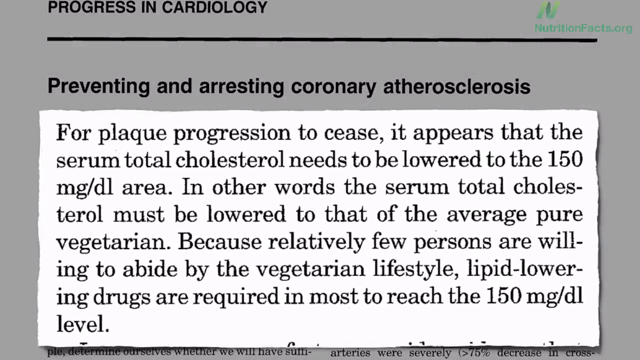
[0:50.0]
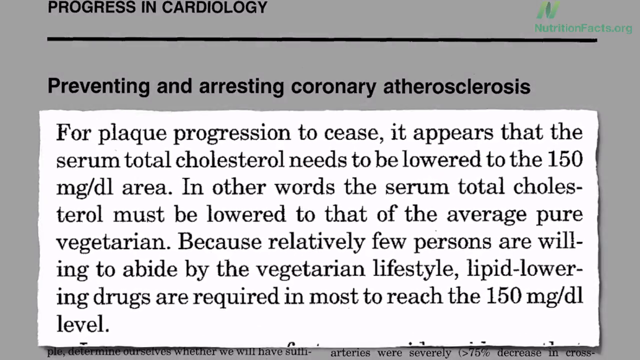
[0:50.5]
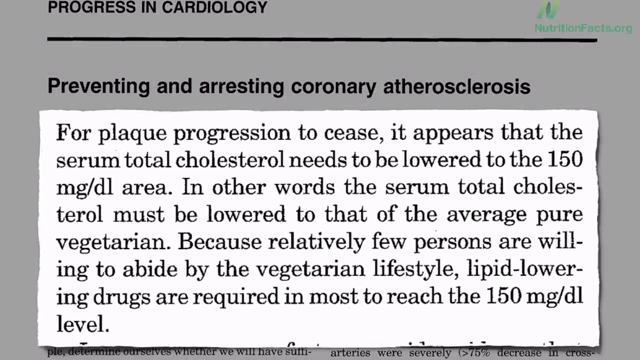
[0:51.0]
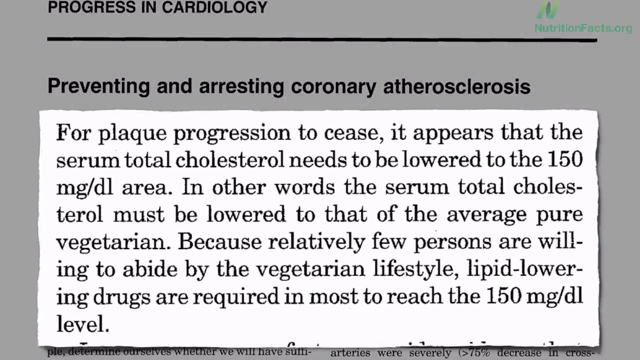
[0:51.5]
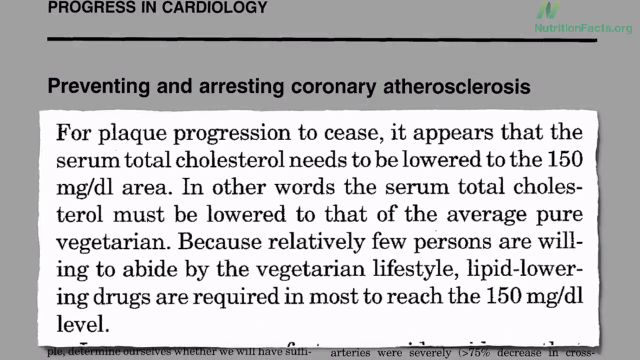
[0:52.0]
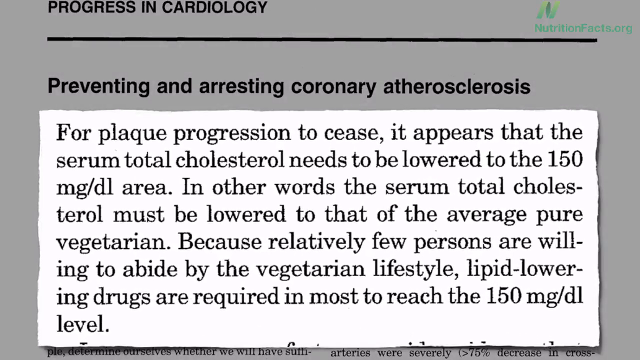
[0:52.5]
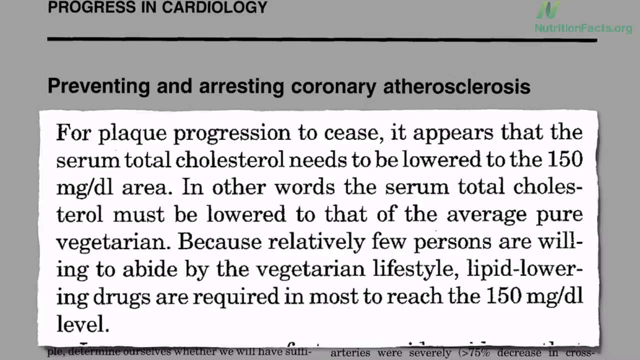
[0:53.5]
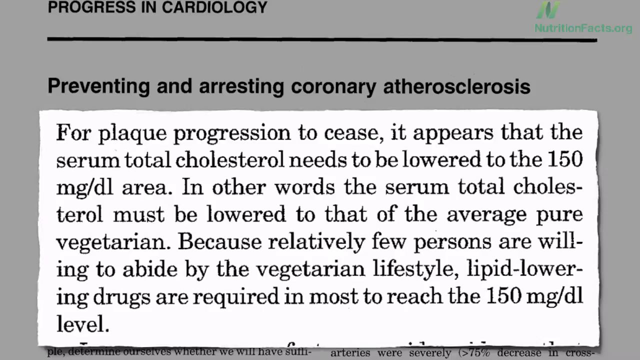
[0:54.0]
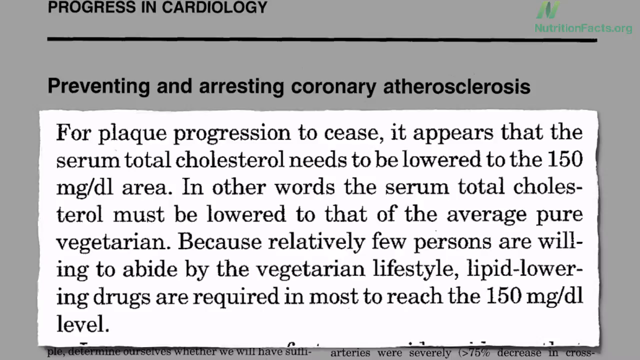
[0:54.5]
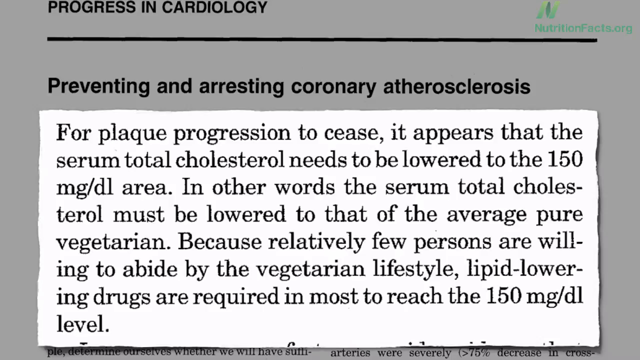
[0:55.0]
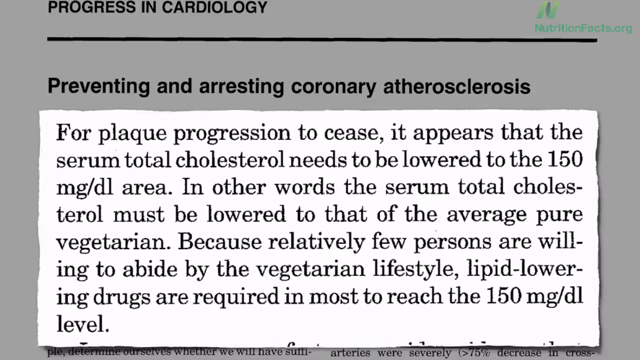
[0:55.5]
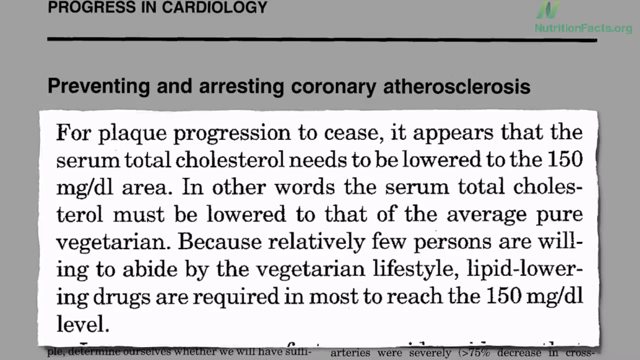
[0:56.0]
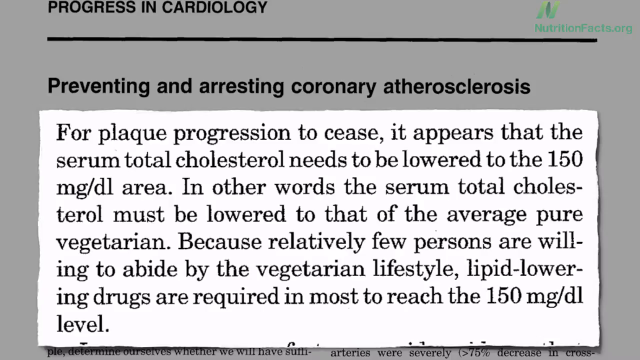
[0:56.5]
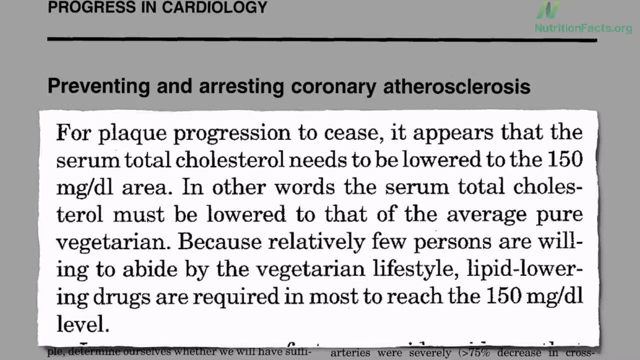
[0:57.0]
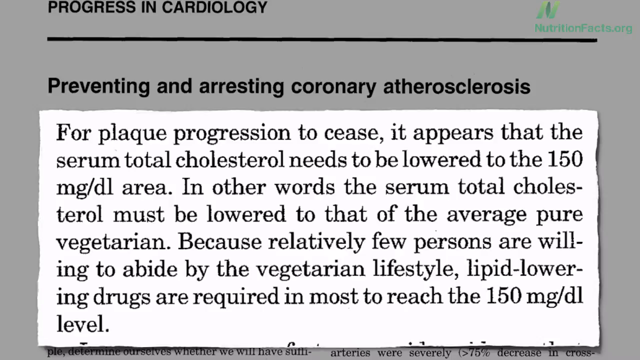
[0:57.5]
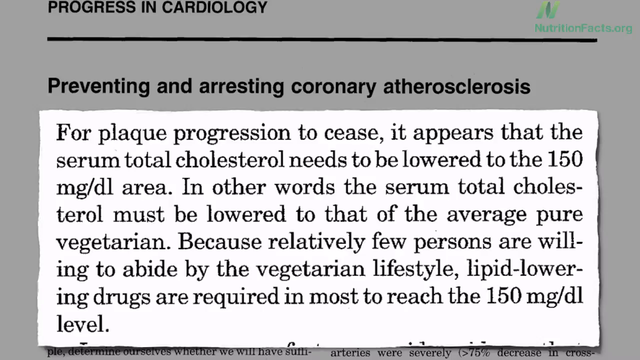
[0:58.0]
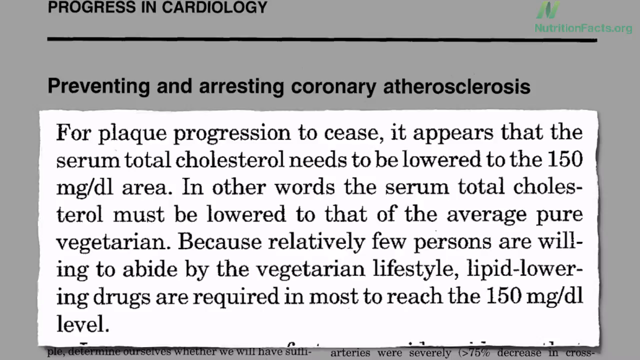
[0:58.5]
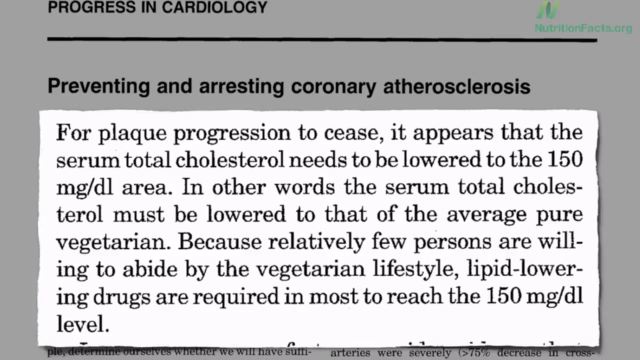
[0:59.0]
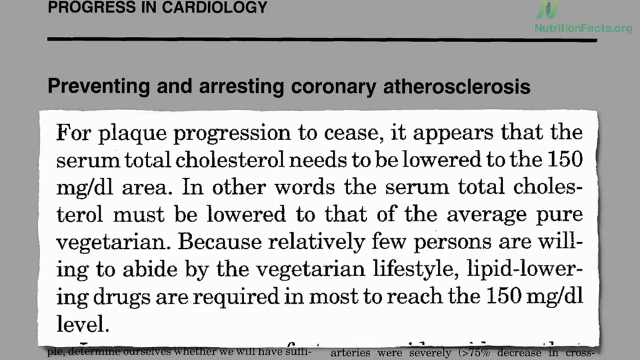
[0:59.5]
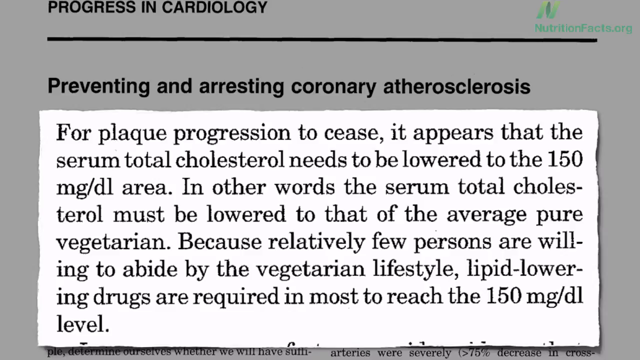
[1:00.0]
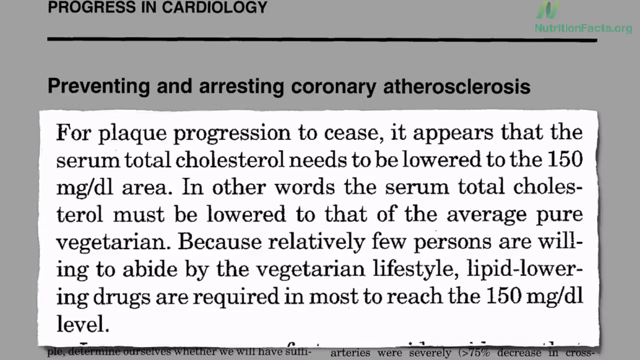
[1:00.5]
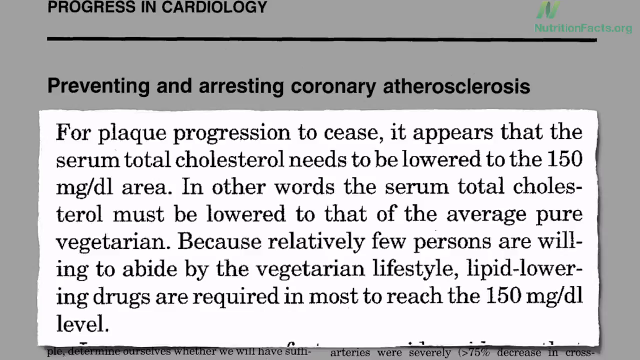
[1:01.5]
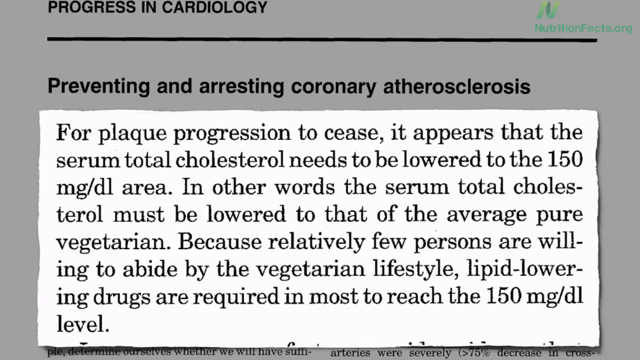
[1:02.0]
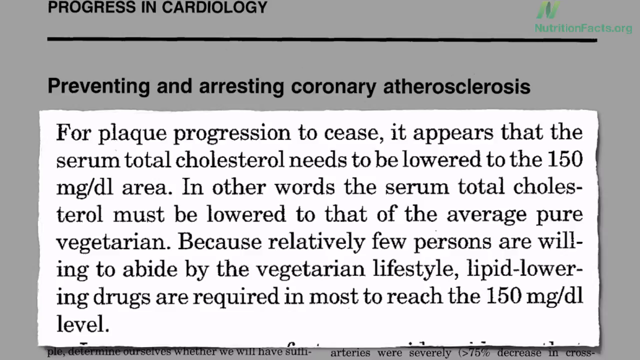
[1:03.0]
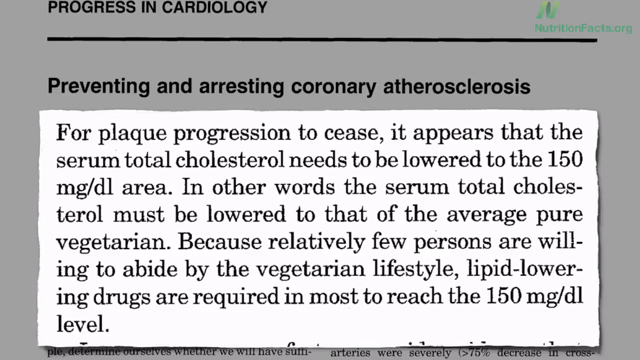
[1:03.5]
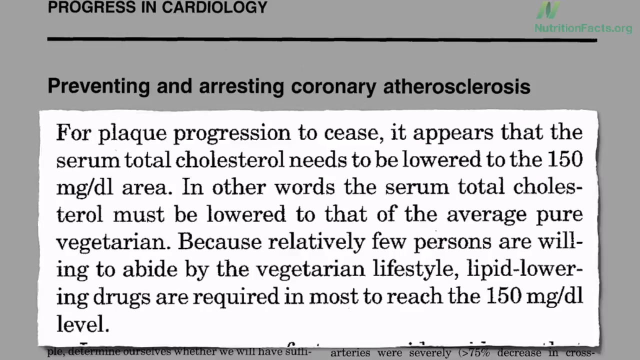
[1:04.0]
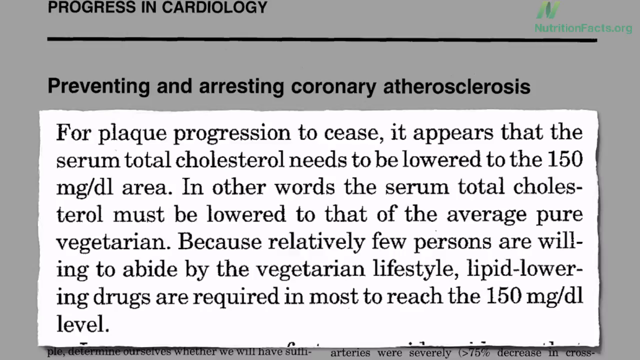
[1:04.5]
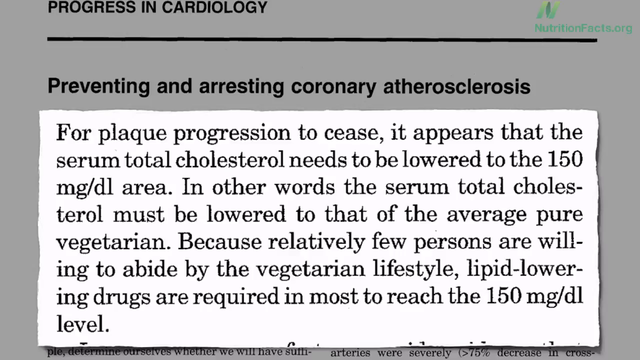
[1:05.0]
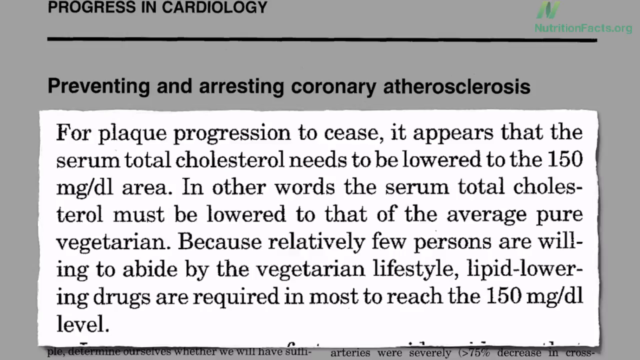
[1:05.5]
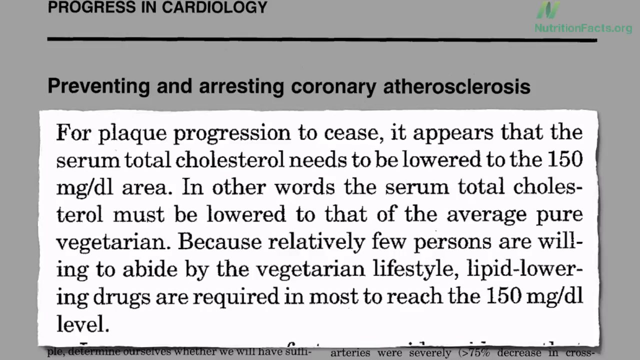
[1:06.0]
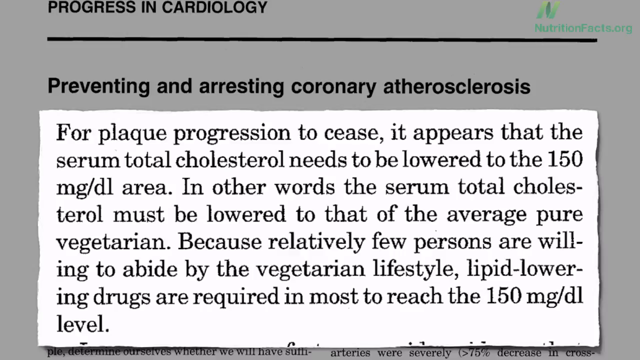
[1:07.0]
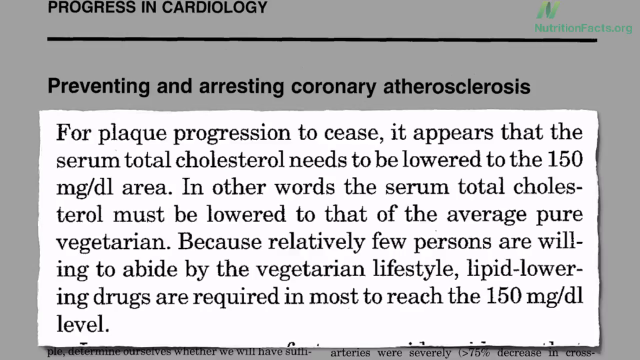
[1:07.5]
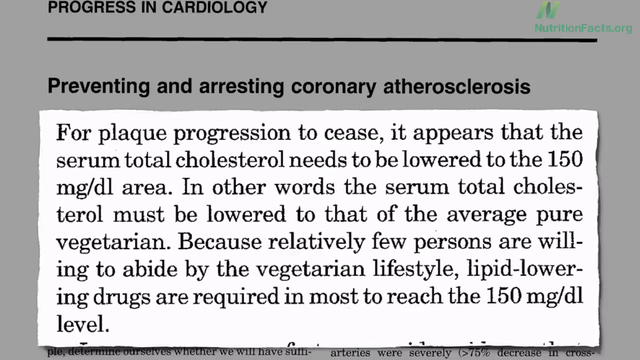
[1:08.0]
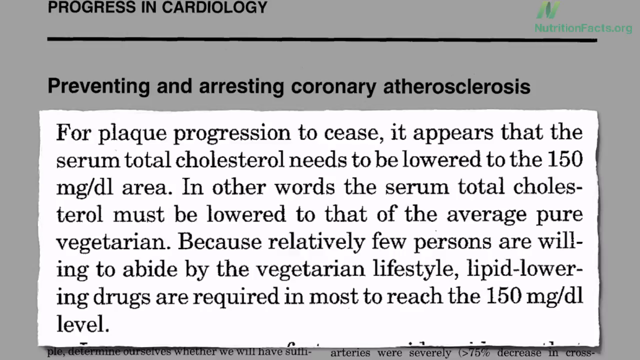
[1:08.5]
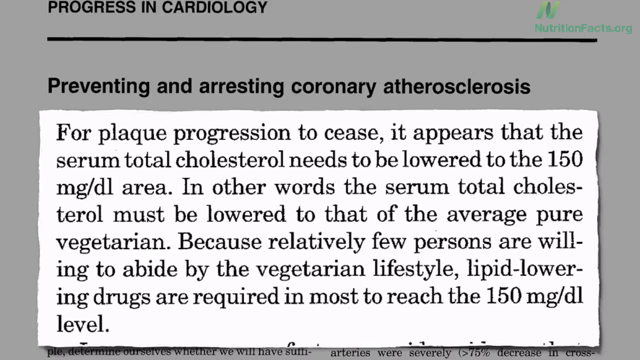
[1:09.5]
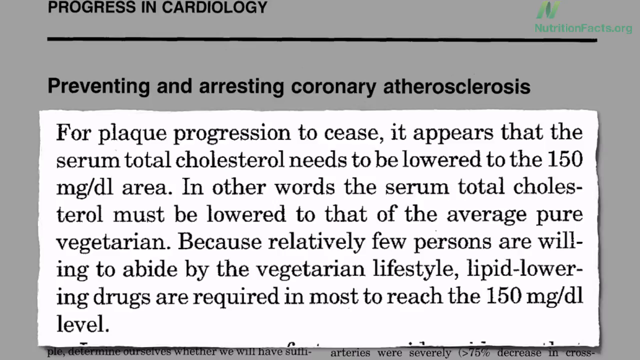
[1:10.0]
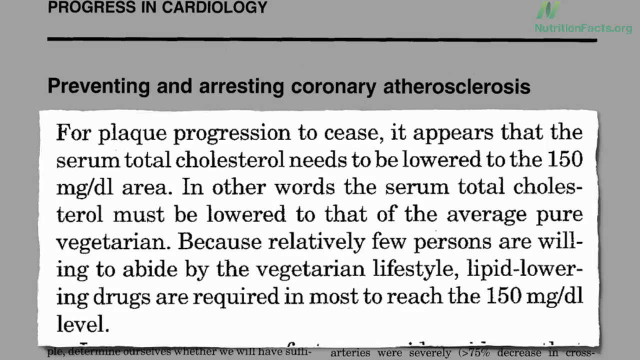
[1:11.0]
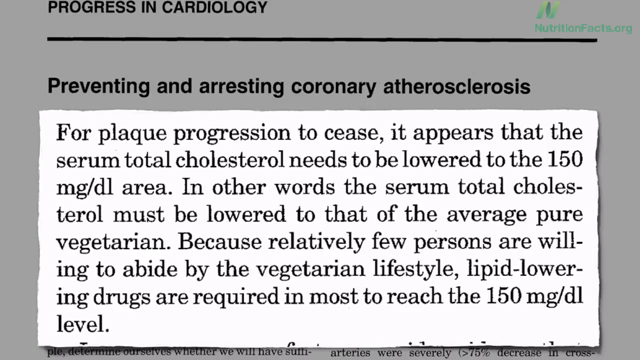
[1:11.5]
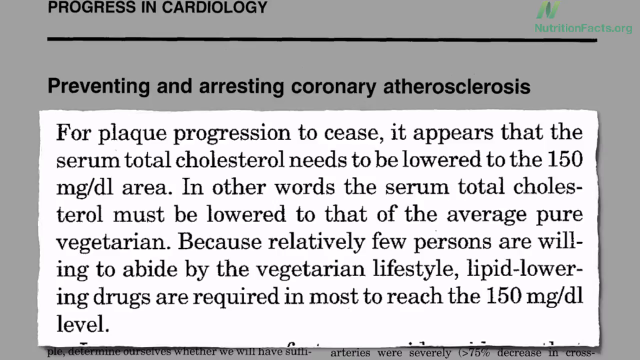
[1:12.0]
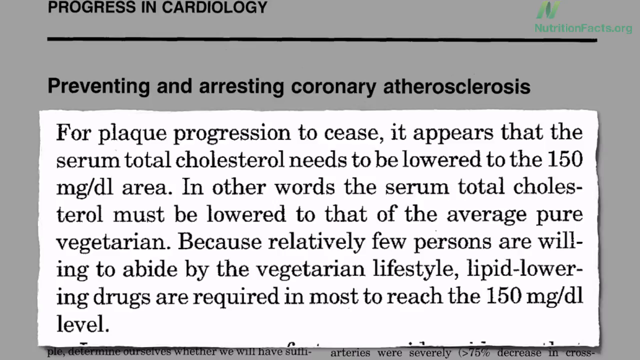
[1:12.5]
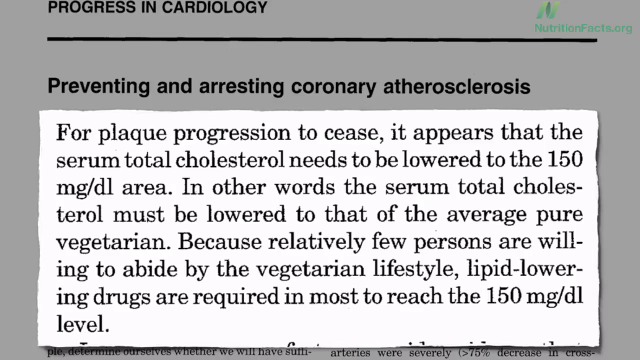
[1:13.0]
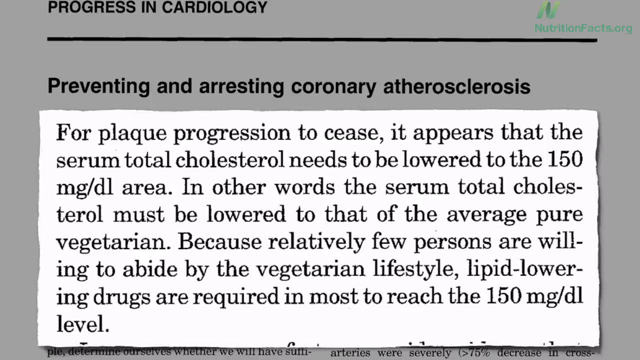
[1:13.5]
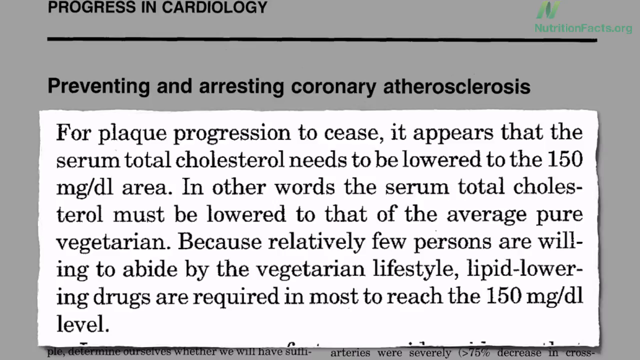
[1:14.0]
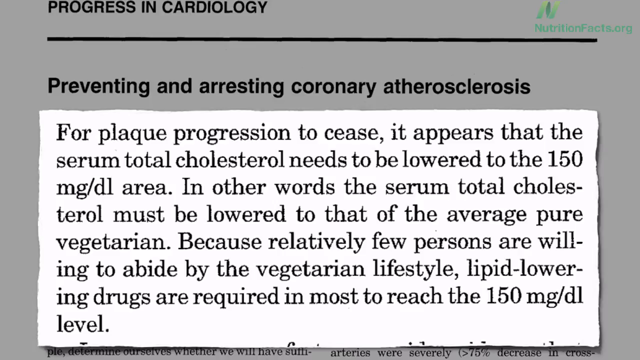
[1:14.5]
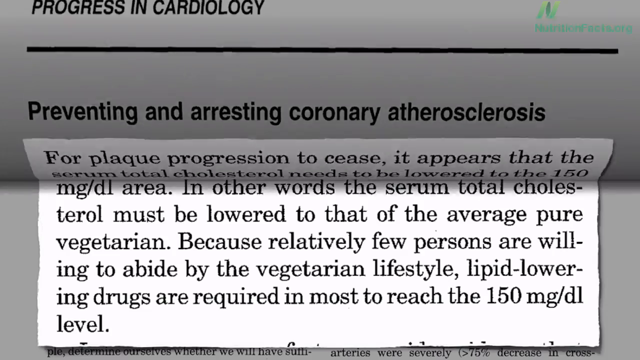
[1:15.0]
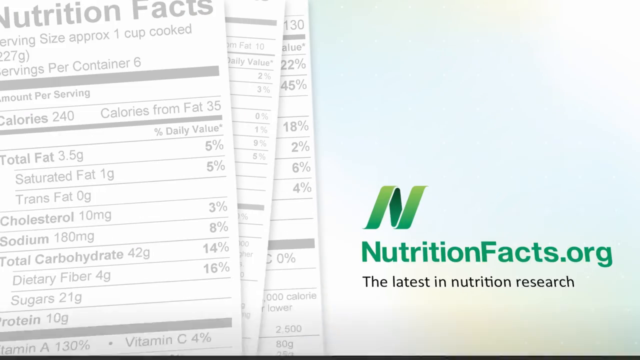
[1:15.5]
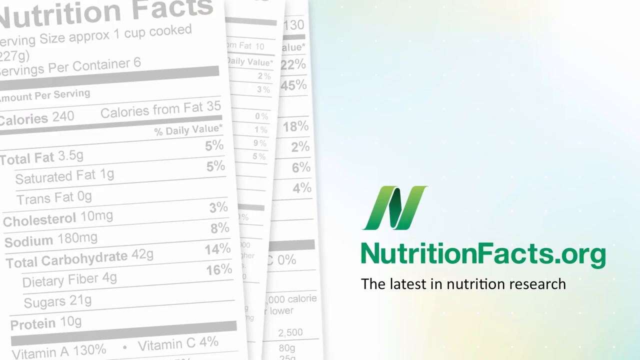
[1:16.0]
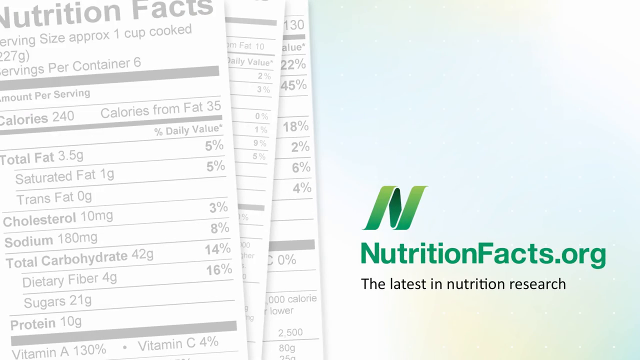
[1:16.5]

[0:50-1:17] The nutritionfacts.org slide shows the Progress in Cardiology paper titled "Preventing and Arresting Coronary Arthrosclerosis." For almost the whole time, the focus is on the pop-out quote: "for plaque progression to cease, it appears that serum total cholesterol needs to be lowered to the 150 mg per dL area. In other words, serum total cholesterol must be lowered to that of the average pure vegetarian because relatively few persons are willing to abide by the vegetarian lifestyle, lipid lowering drugs are required in most." The quote is in a white box with a kind of wavy edge, as if cut out of paper, and stays as an overlay over the original paper for almost the entire time. At the very end, the video returns to the same nutritionfacts.org splash page seen at the beginning, with the logo, the title and the grayed-out nutrition boxes.